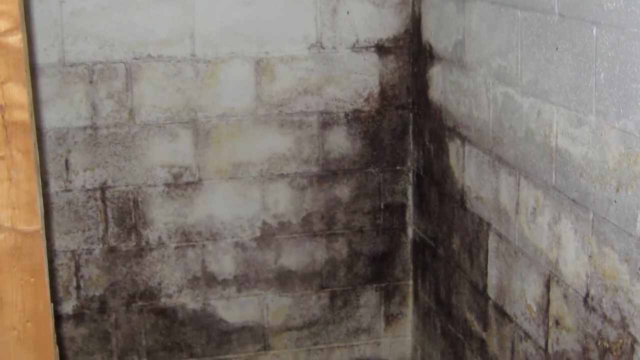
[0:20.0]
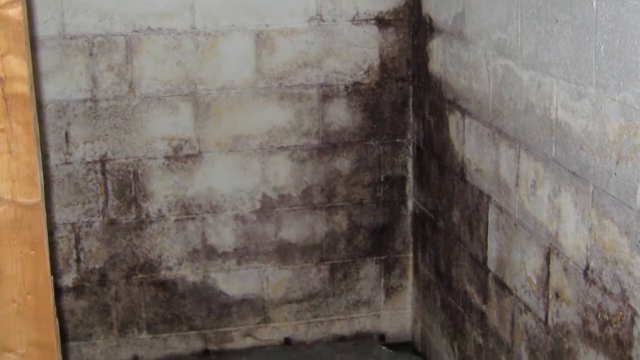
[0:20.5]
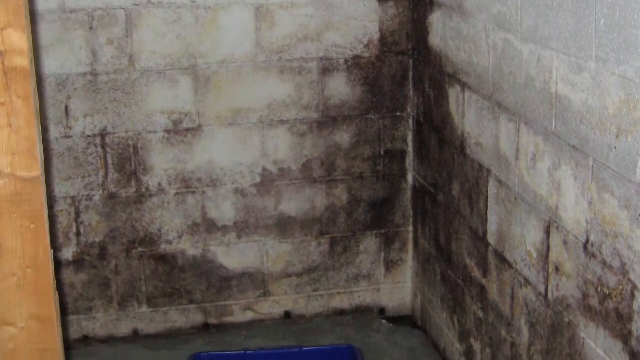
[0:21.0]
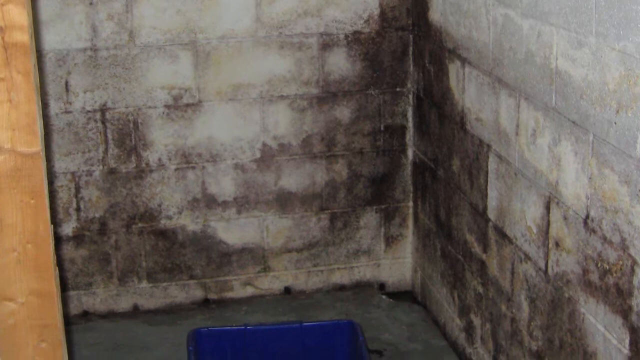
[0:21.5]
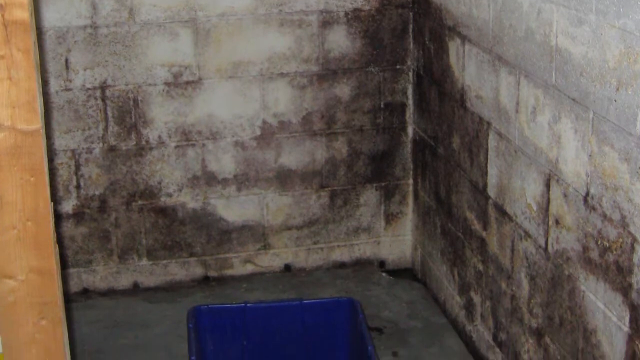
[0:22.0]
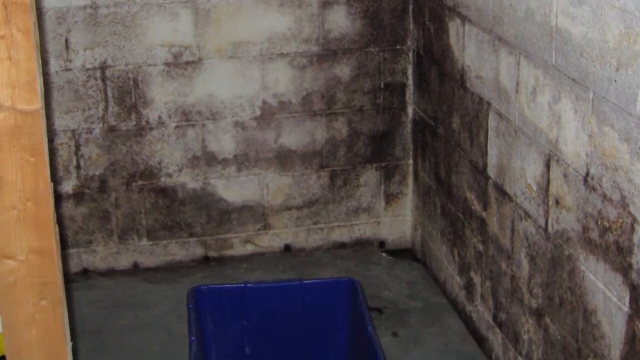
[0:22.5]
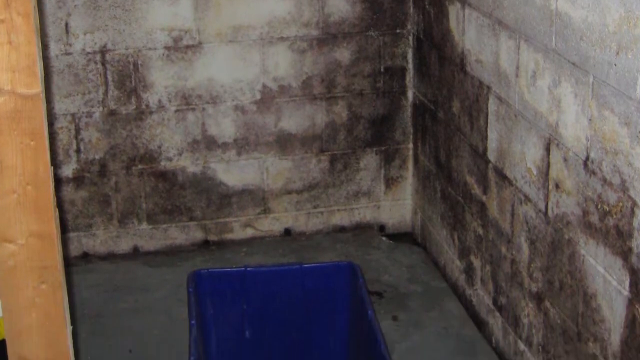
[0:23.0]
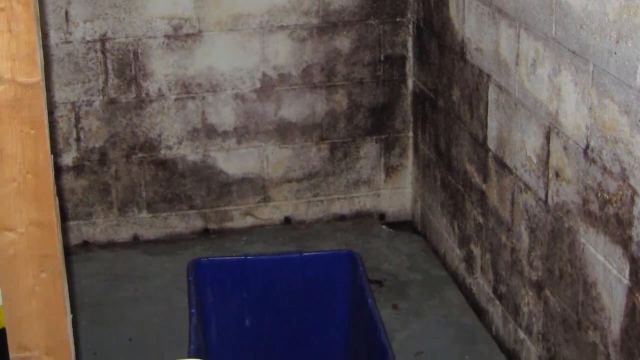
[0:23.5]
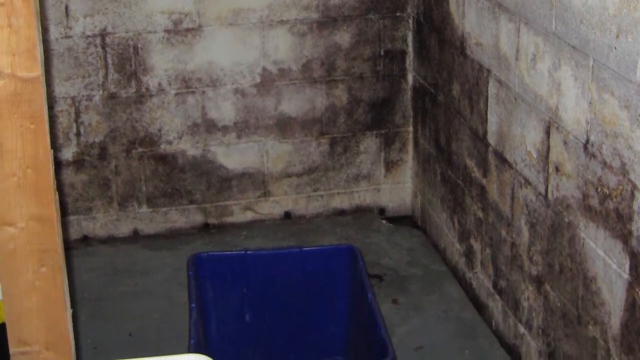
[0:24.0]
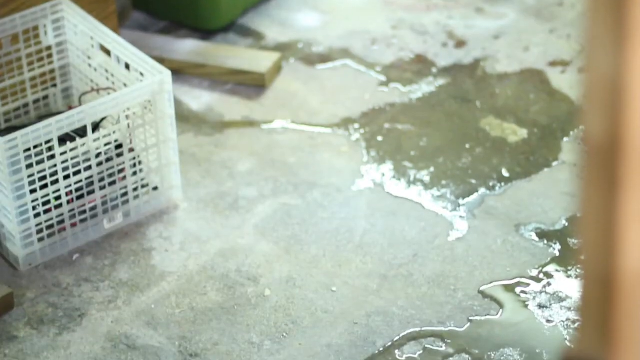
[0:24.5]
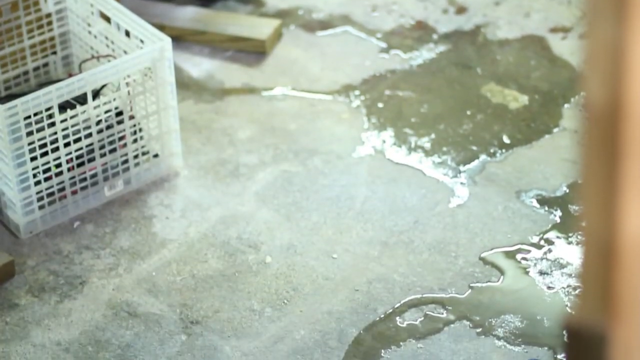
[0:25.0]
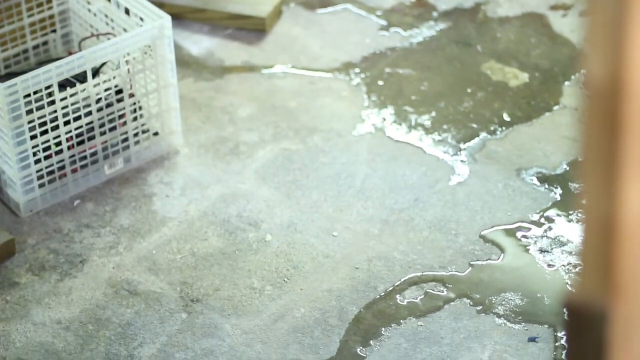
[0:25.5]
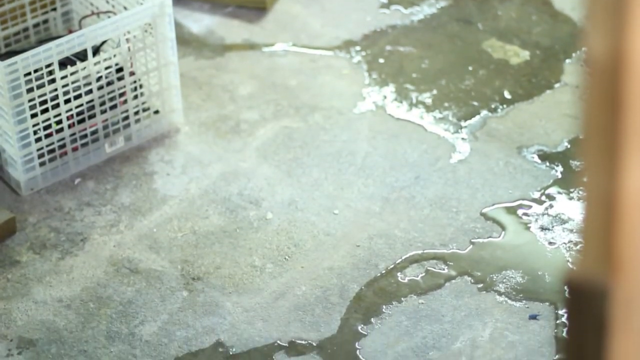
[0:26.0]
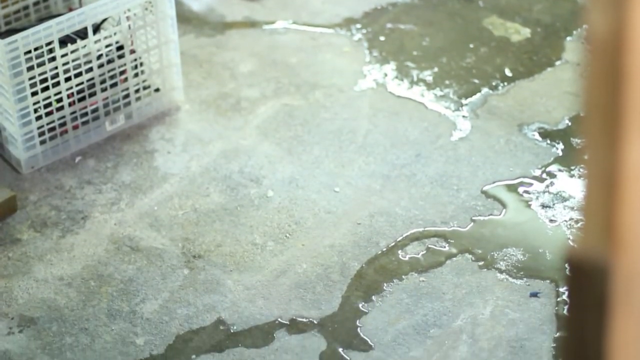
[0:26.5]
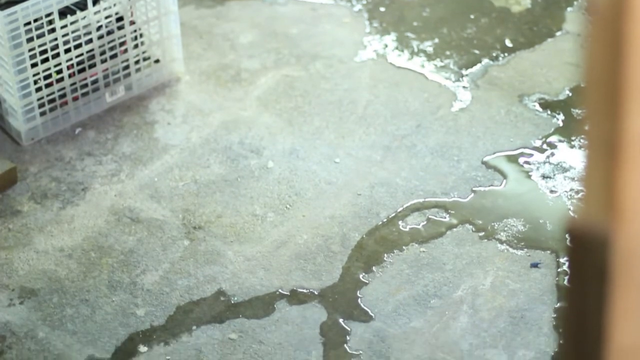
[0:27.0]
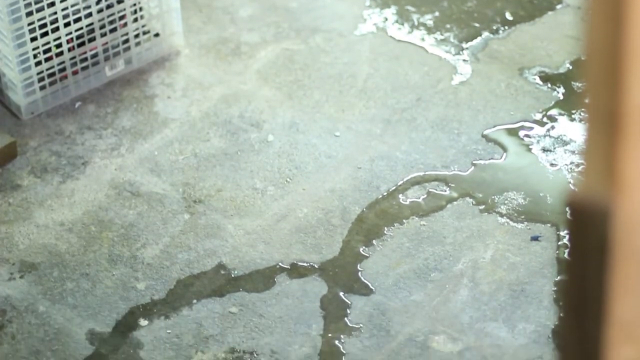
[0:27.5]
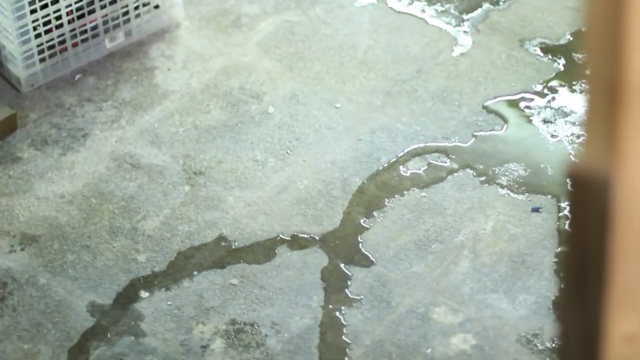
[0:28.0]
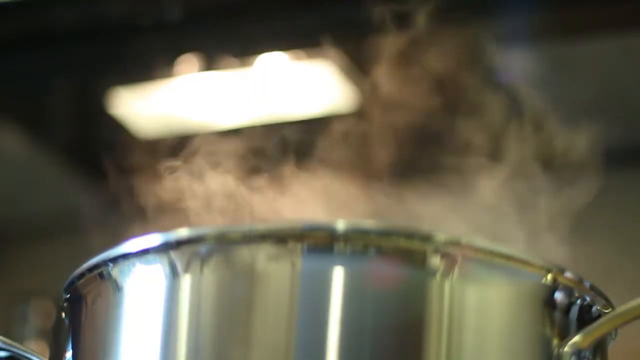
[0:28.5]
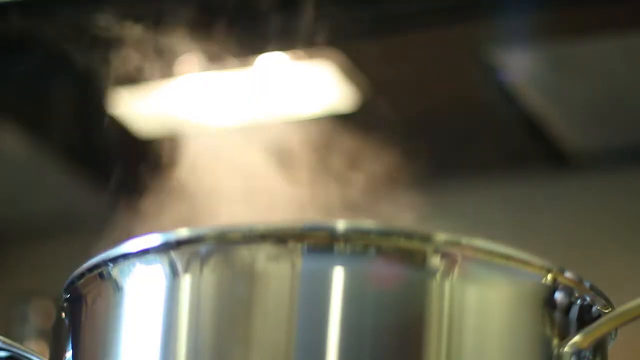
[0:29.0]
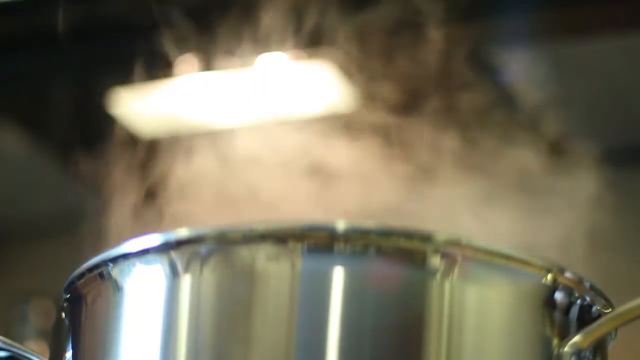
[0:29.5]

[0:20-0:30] A wall with white bricks appears, most likely stone or masonry, with black mold growing on the corner on the right of the screen, where two planes of the wall intersect. On the left of the screen there is a brief strip of wood. The camera pans down to a stone-covered floor with a blue bucket or tote bin. The video cuts to a stone floor with a lot of water on it and a white milk crate to the left; the scene looks kind of messy. Next, a metal pot has steam coming off it, and the steam blocks out a light above it, leaving only a blurry highlight.